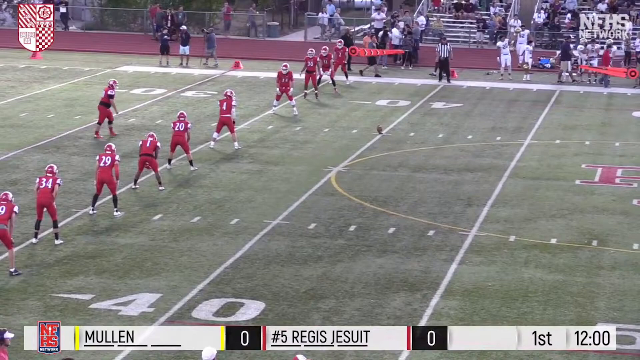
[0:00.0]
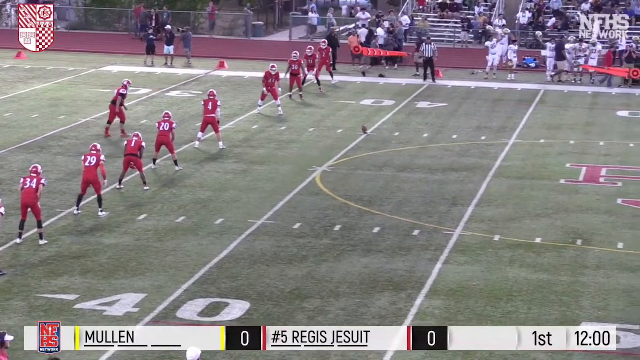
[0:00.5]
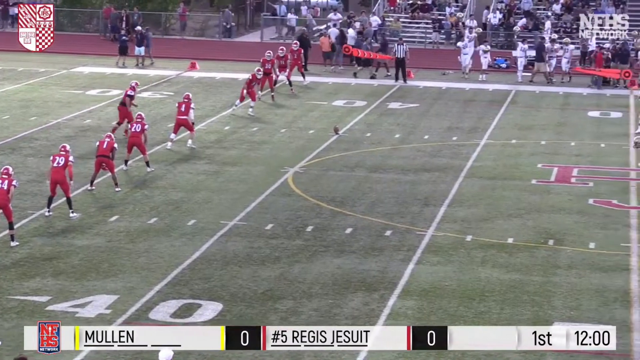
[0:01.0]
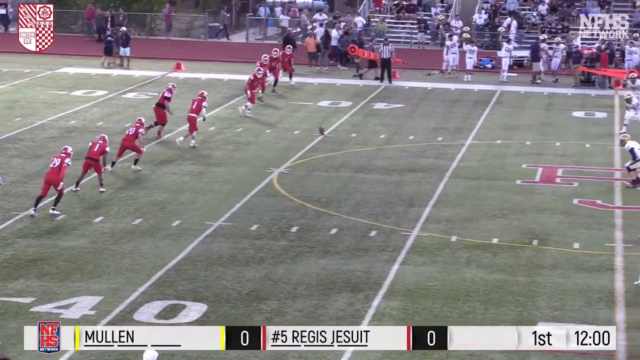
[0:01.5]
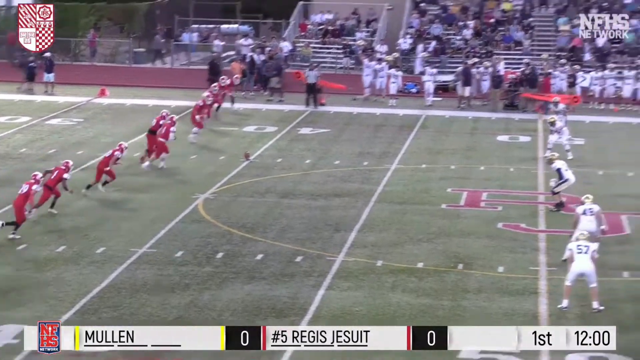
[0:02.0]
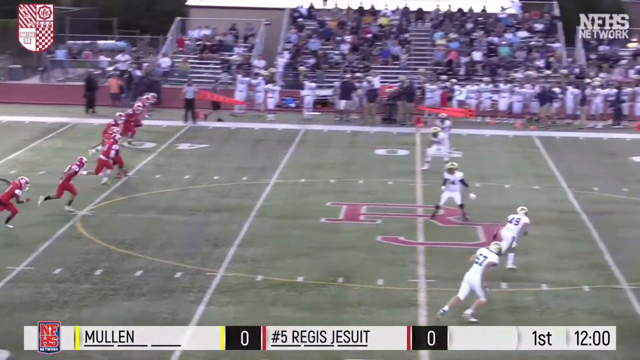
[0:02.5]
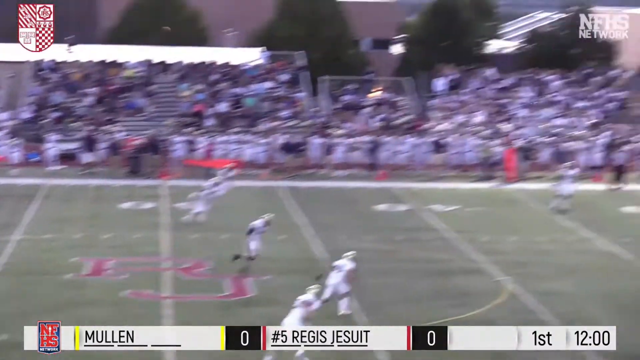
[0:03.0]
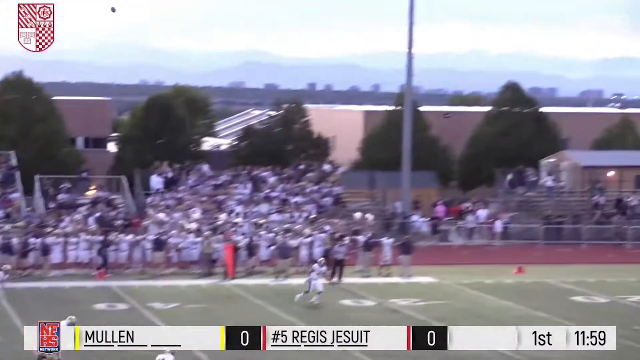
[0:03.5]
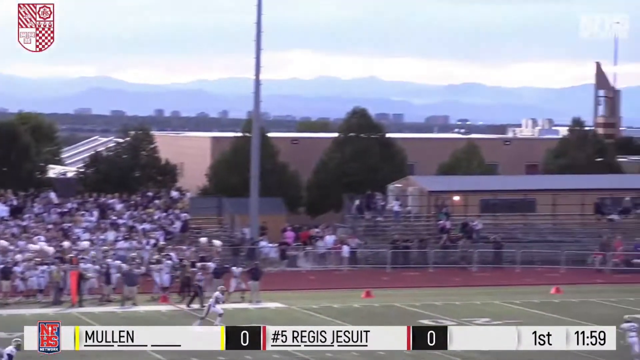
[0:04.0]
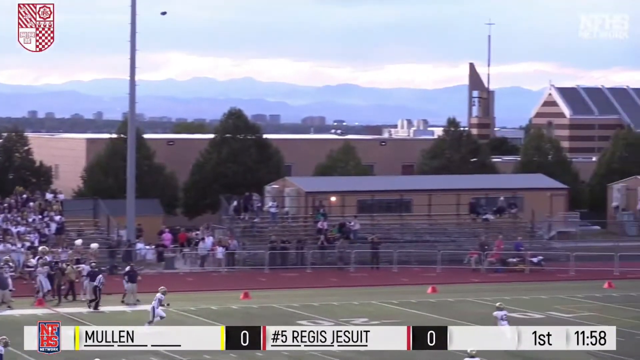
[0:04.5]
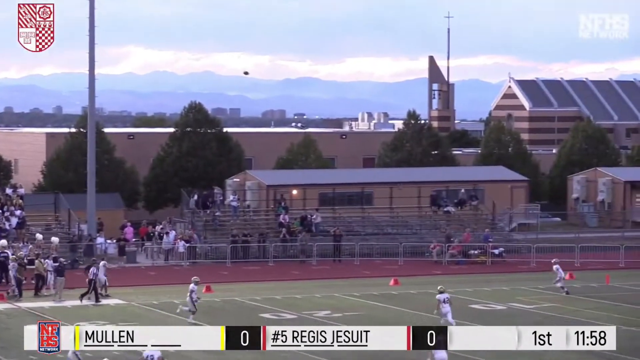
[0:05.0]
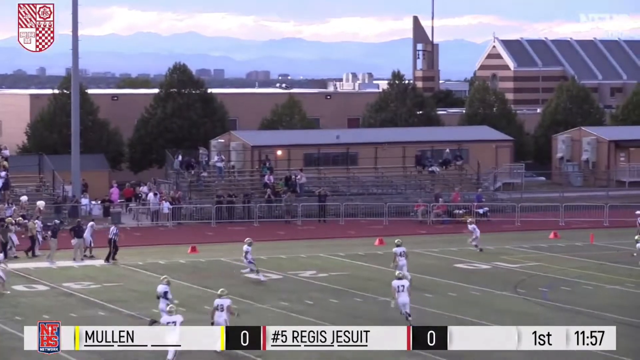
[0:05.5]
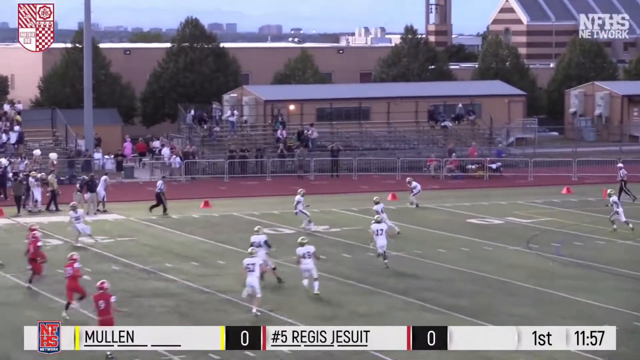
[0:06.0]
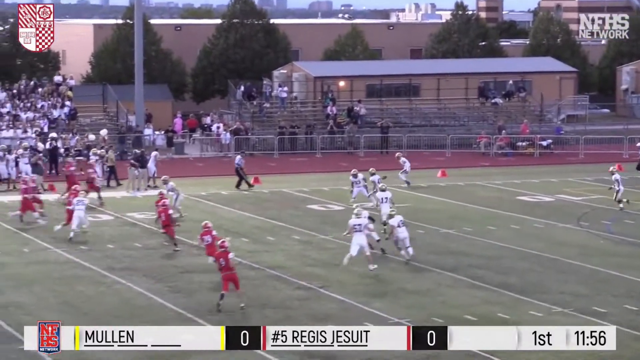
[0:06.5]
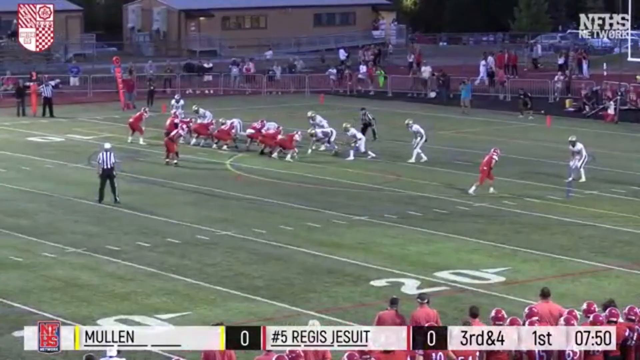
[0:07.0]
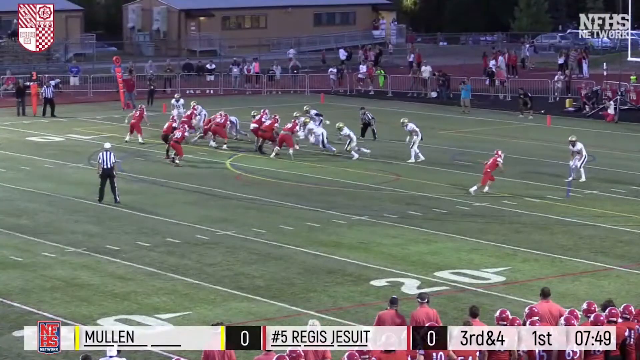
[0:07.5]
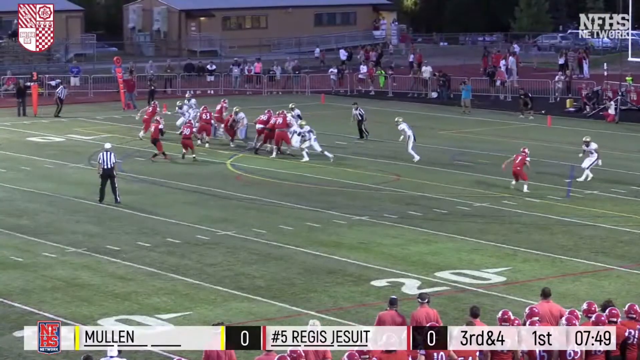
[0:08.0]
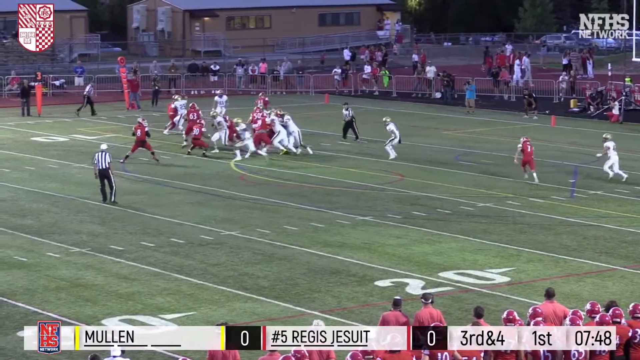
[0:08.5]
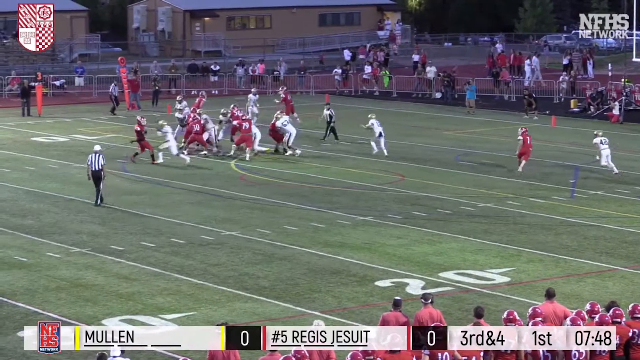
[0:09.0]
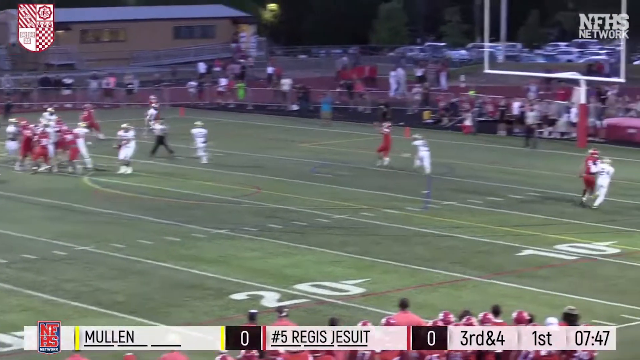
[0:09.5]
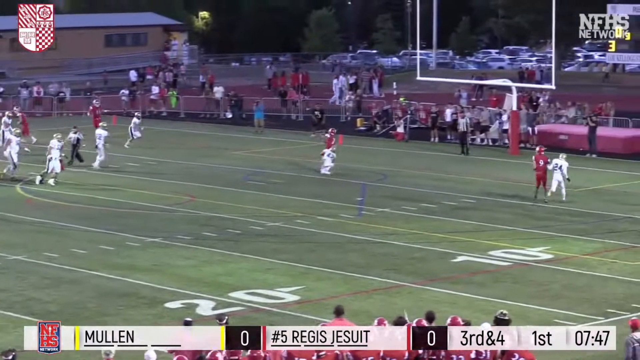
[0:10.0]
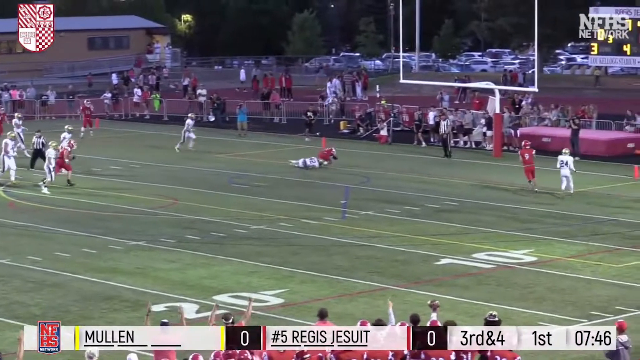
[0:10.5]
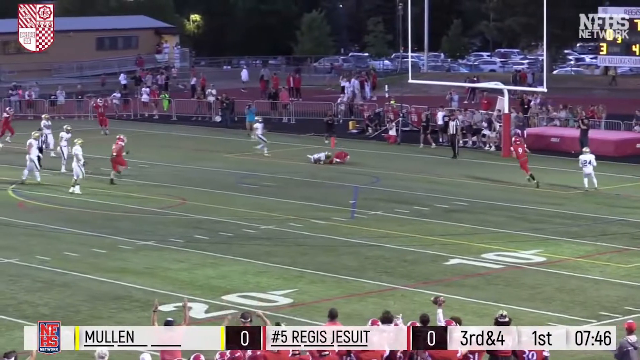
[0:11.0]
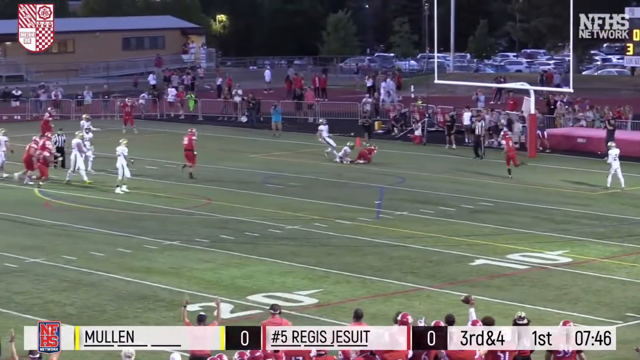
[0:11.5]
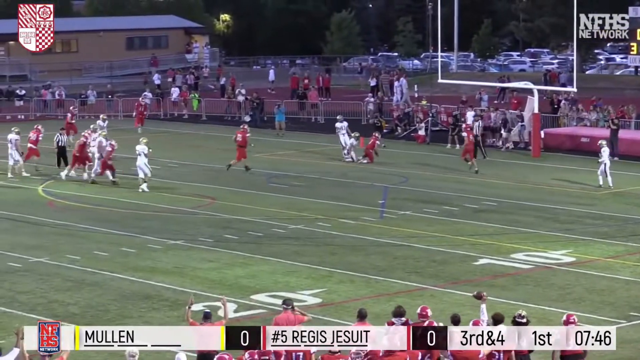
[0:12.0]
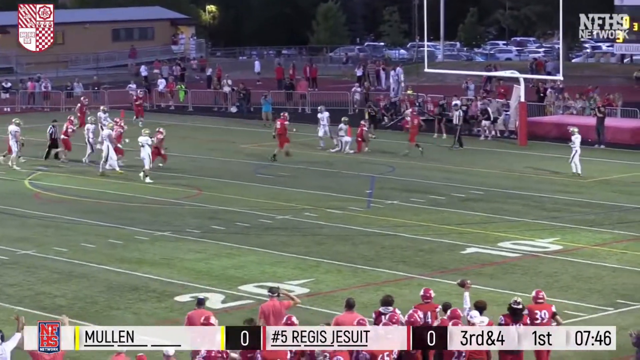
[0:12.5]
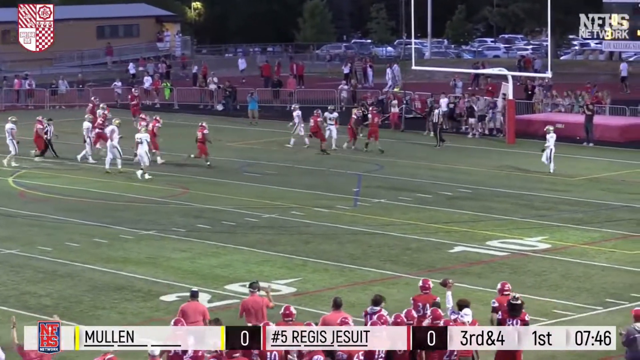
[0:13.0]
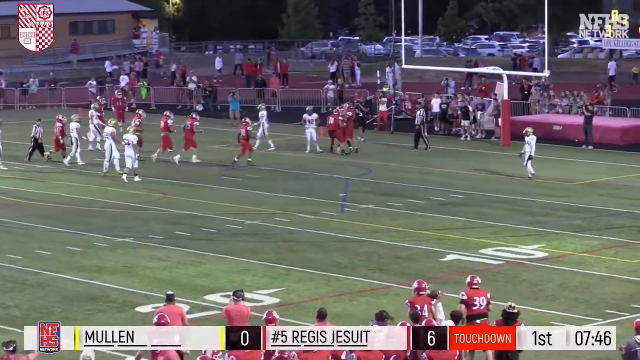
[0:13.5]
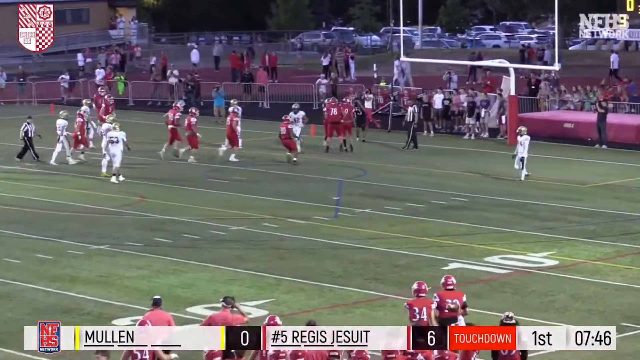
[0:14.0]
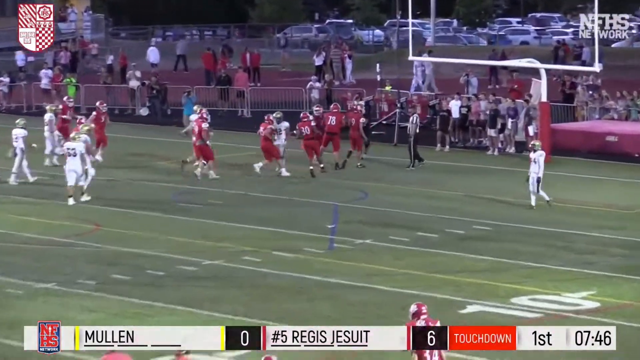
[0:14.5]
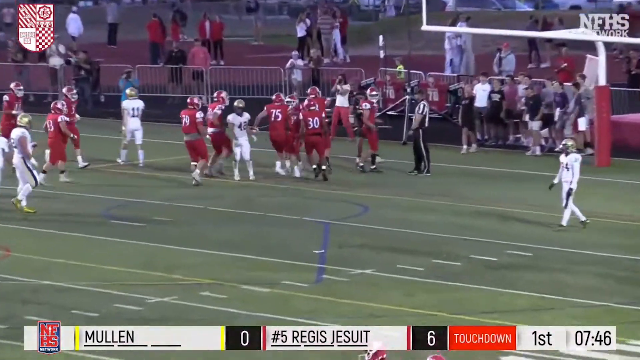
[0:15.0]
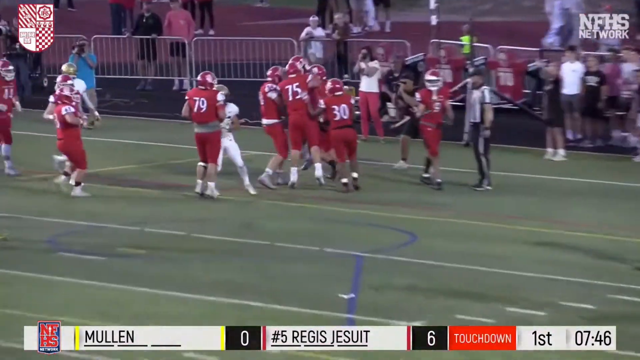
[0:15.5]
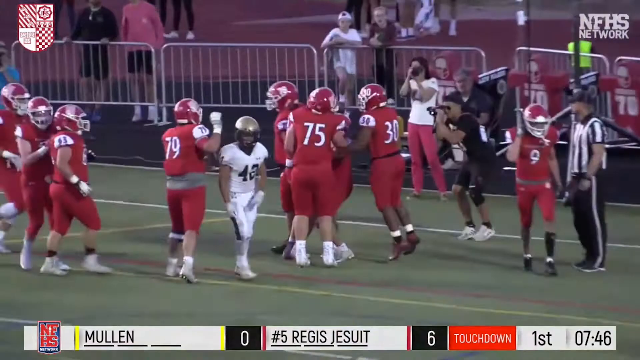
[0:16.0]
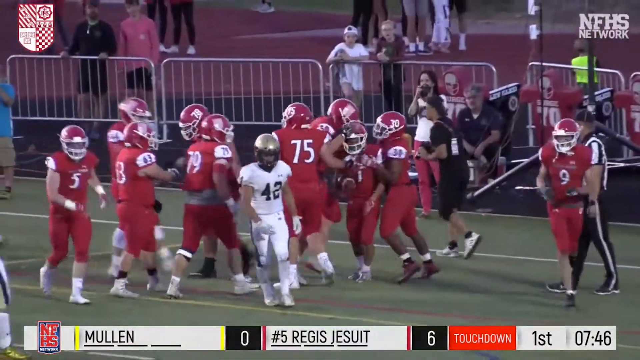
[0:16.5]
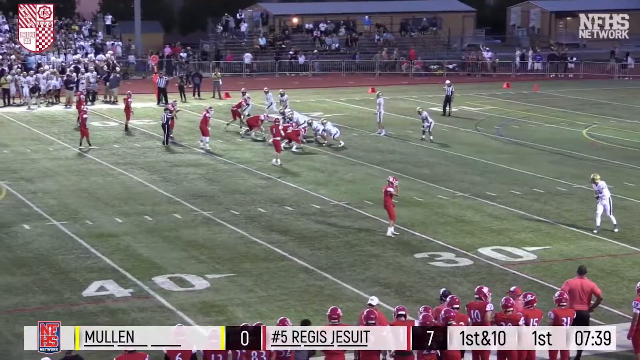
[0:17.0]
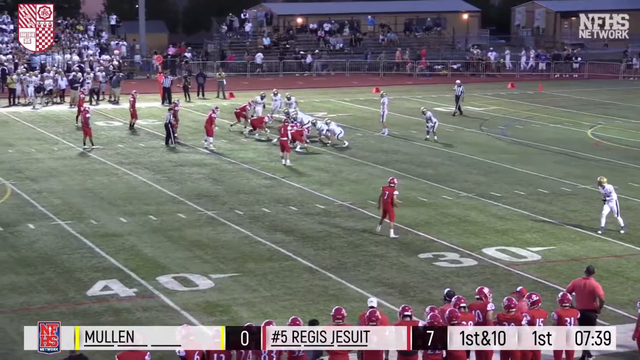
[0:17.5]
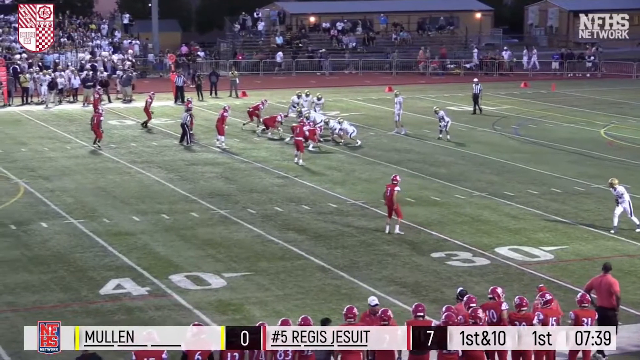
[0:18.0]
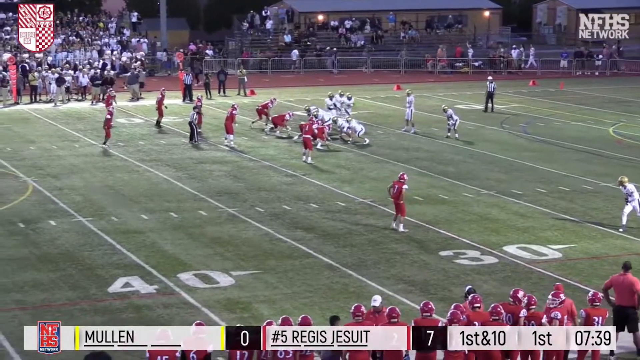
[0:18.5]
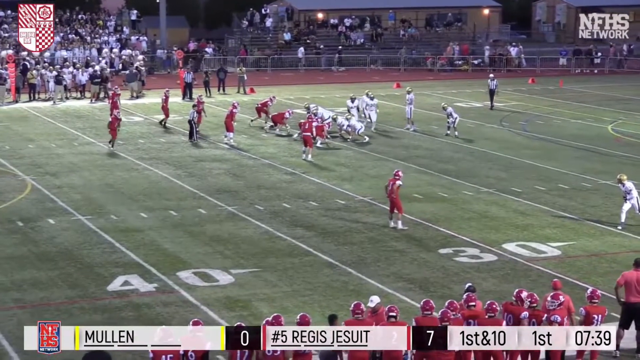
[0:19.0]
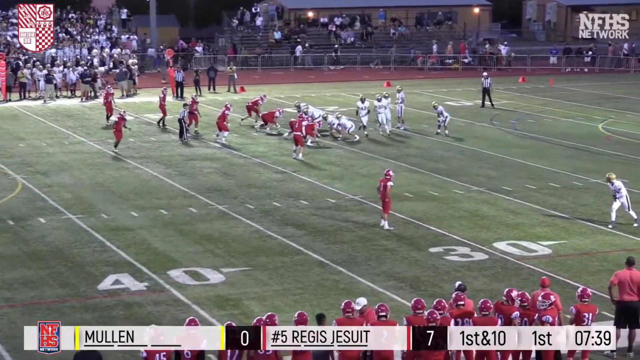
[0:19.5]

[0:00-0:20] The footage looks like a high school football game. A team is lined up on the left-hand side of the field, and a ball is placed on a tee at the 40-yard line. A kicker, much bigger than everyone else on his team, approaches the ball. As the camera travels a little to the right, a team in white jerseys is lined up ready to receive the kickoff. The kicker kicks the ball into the air, with bleachers and people standing by in the background. The camera tracks the ball as it lands in the hands of a player in a white jersey, who drops it out of bounds. The video cuts to different gameplay: the quarterback of the red-jersey team takes the ball and throws with his left arm to receiver number one, who catches it in the end zone and is tackled by a white-jersey player. It is a touchdown, and teammates join him to celebrate in the end zone. The next play shows the white team on offense, with three white-jersey teammates on the right side running toward the near side of the field.